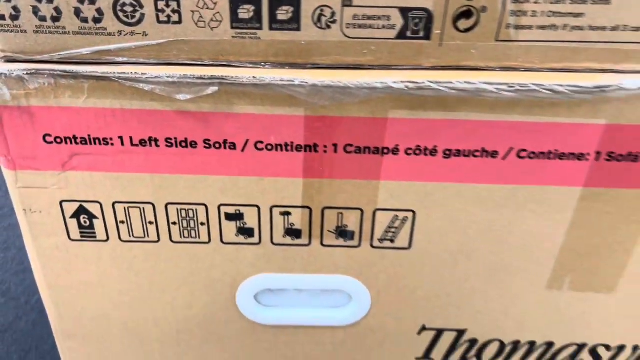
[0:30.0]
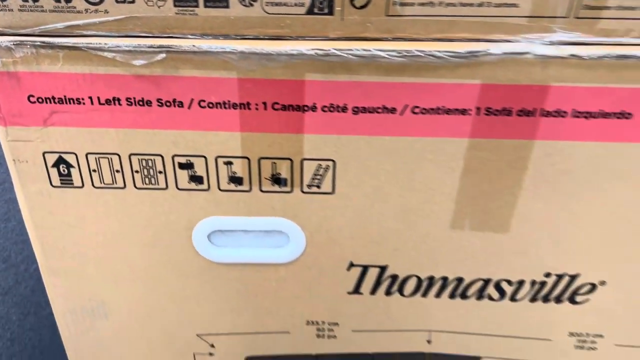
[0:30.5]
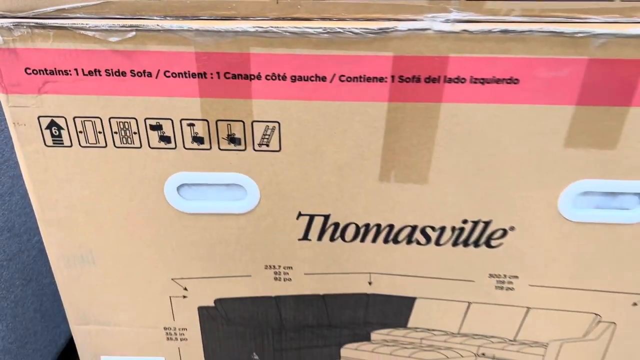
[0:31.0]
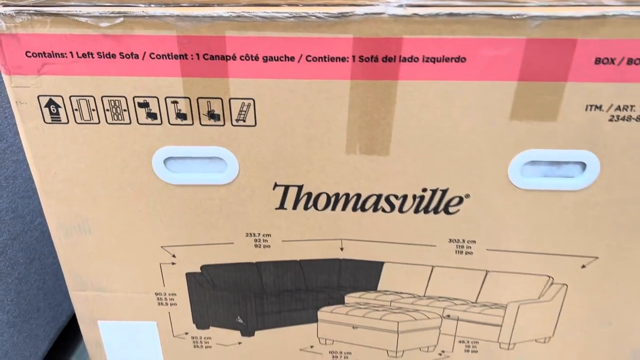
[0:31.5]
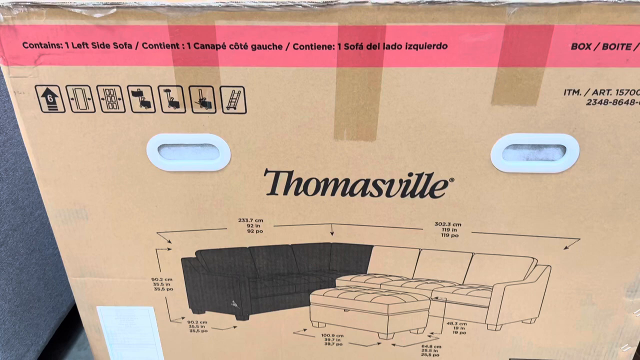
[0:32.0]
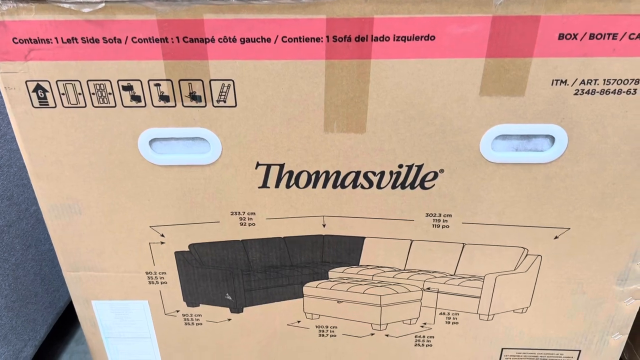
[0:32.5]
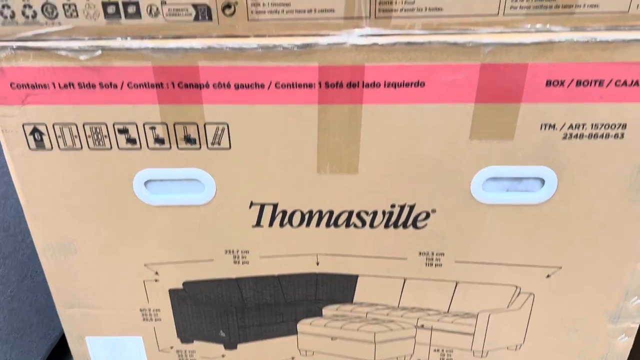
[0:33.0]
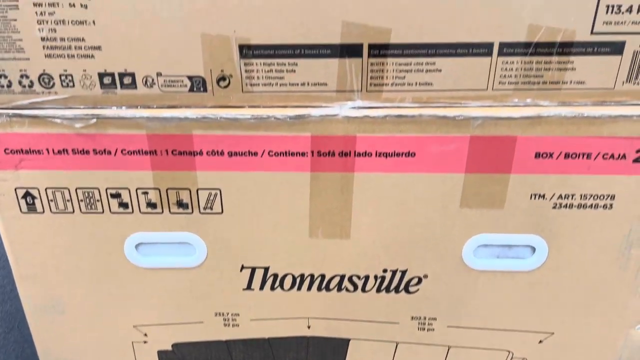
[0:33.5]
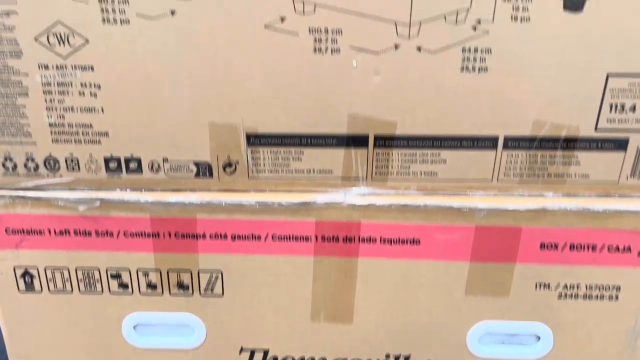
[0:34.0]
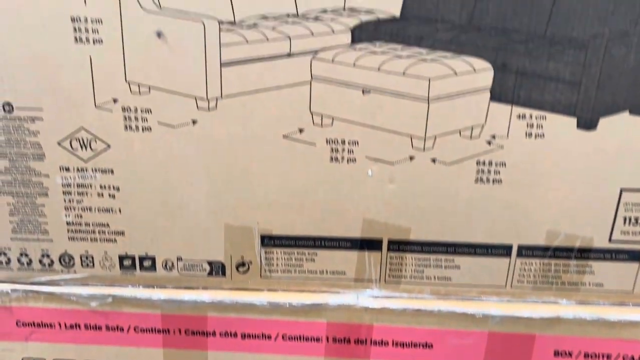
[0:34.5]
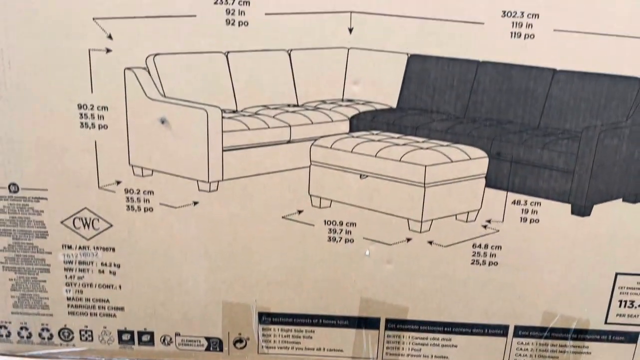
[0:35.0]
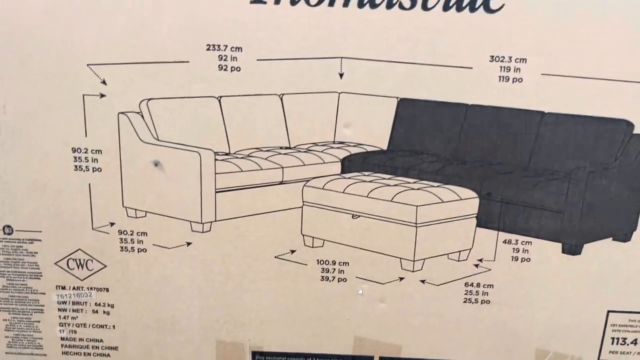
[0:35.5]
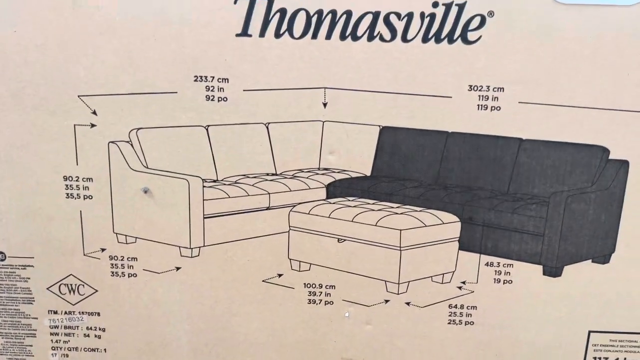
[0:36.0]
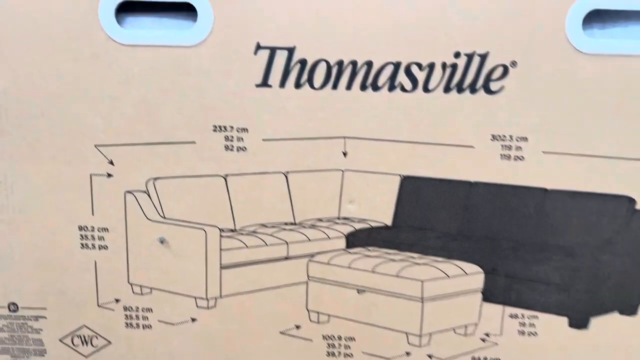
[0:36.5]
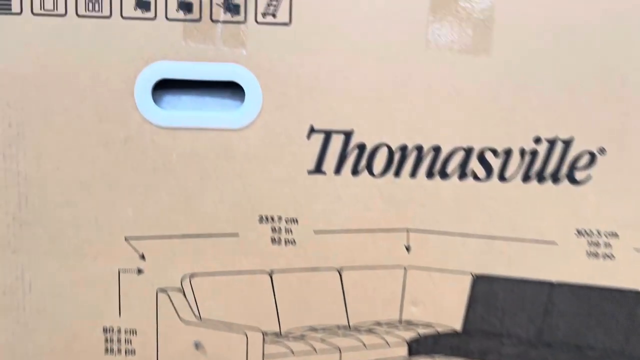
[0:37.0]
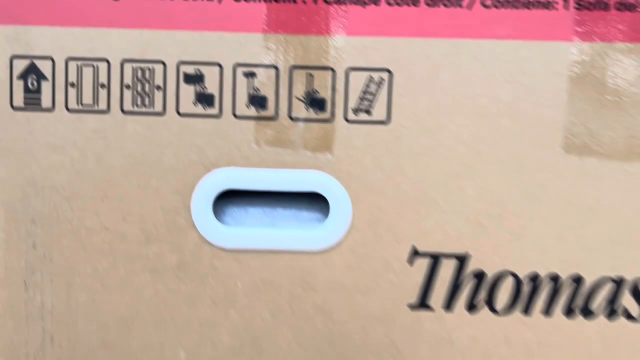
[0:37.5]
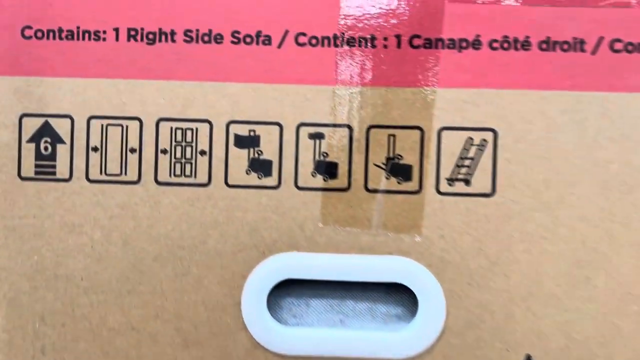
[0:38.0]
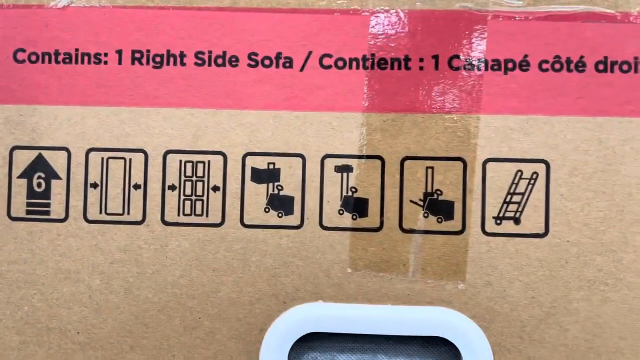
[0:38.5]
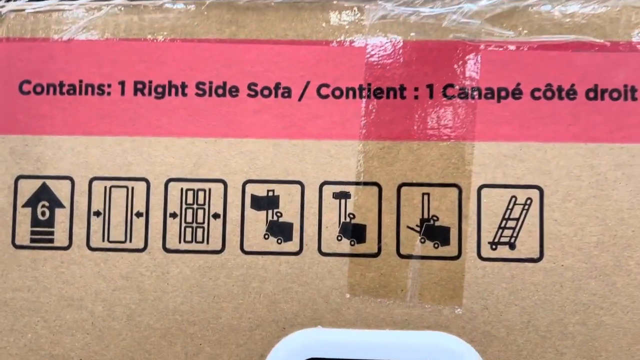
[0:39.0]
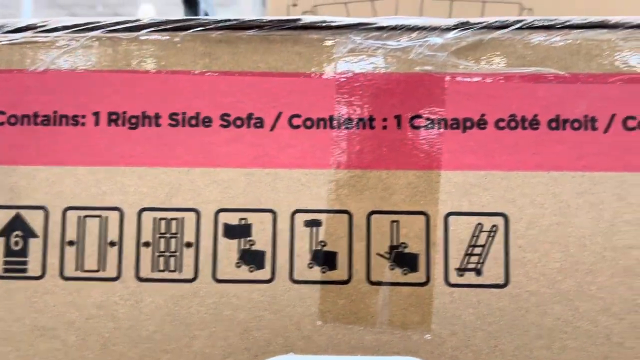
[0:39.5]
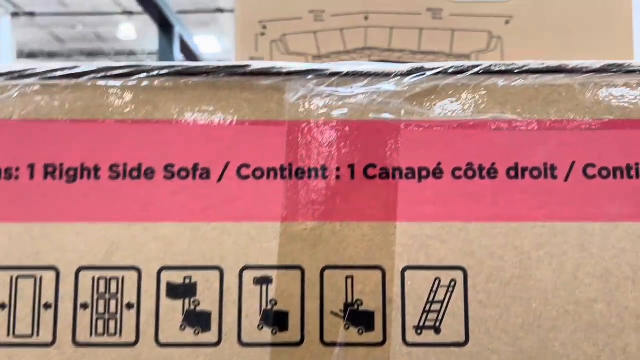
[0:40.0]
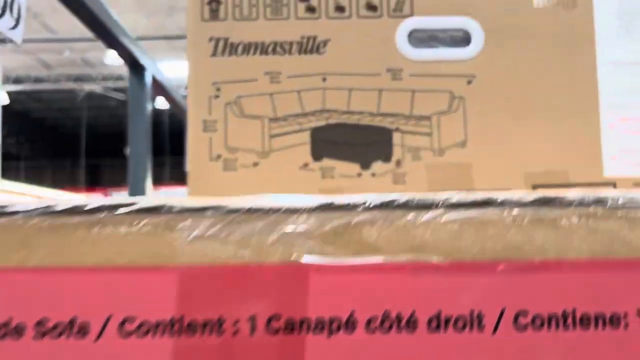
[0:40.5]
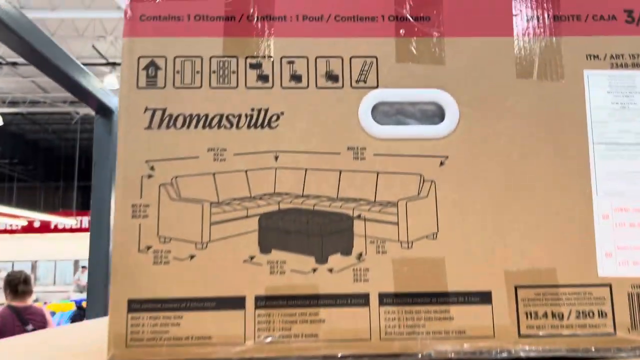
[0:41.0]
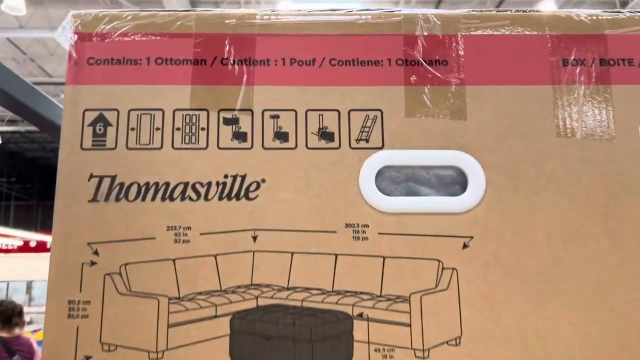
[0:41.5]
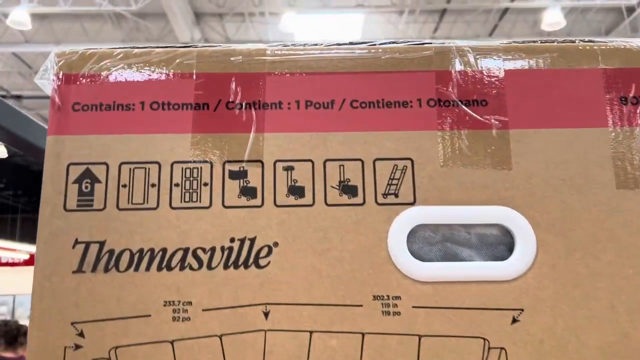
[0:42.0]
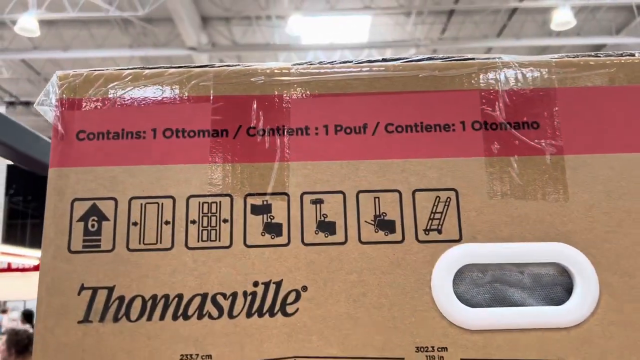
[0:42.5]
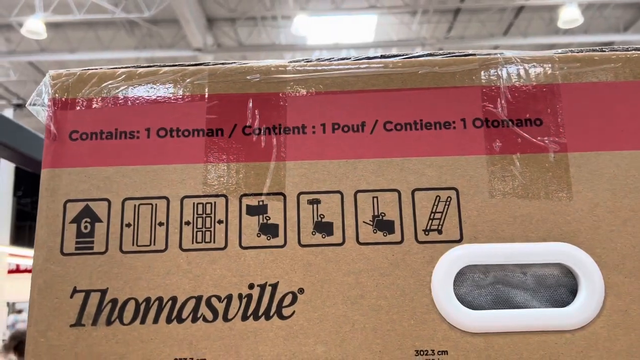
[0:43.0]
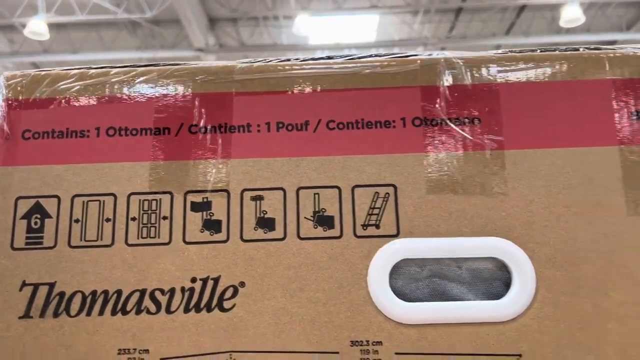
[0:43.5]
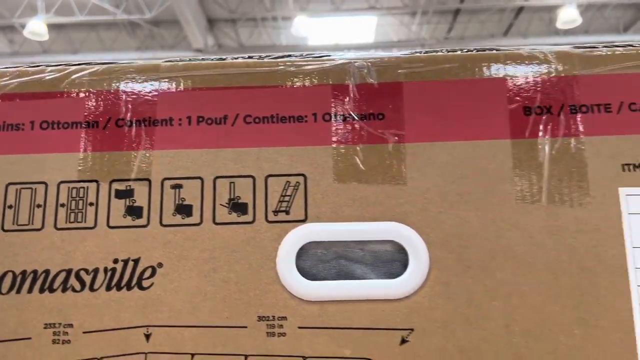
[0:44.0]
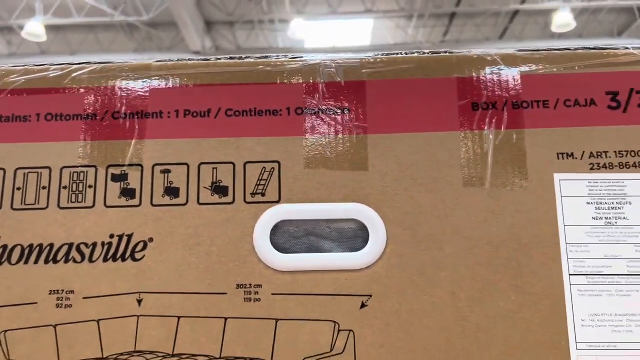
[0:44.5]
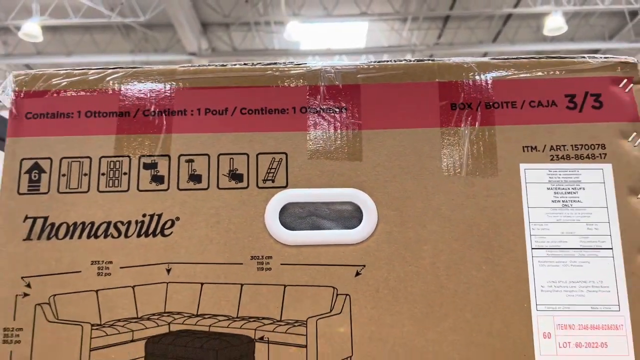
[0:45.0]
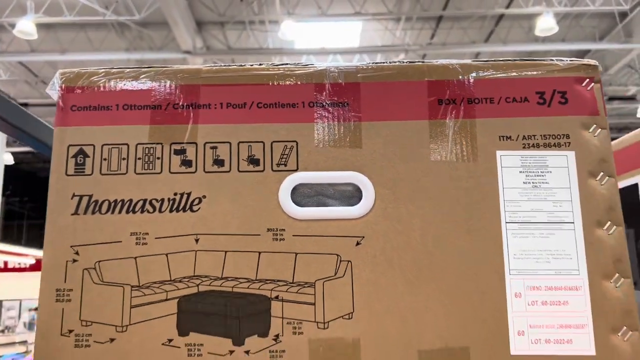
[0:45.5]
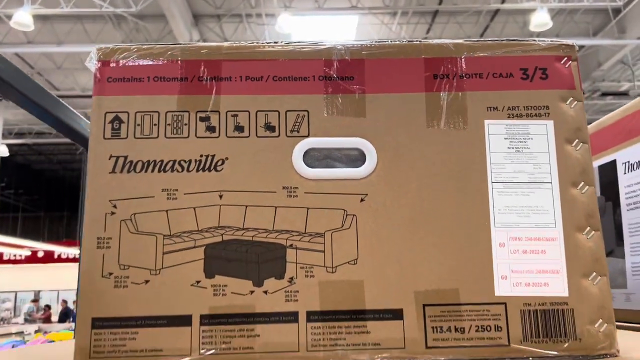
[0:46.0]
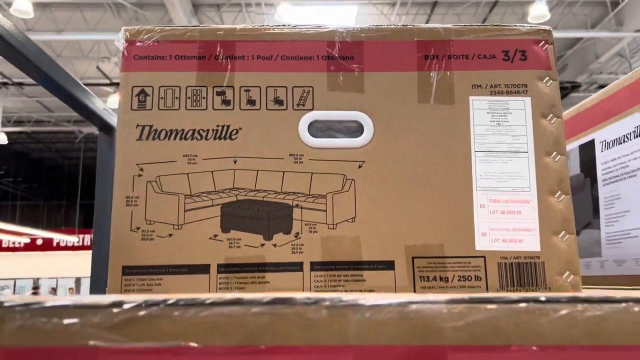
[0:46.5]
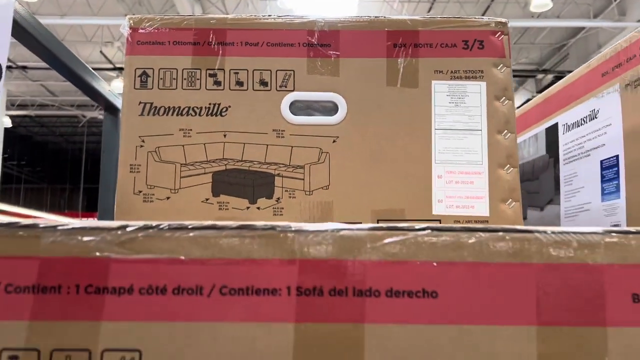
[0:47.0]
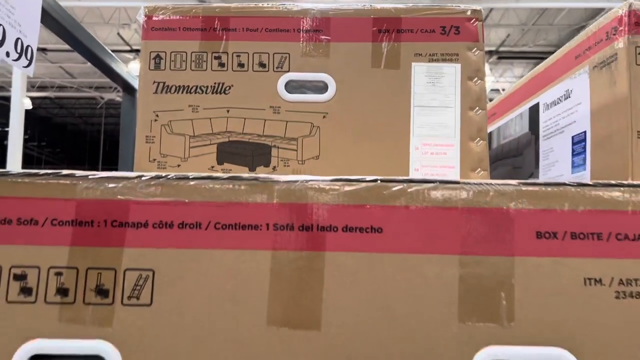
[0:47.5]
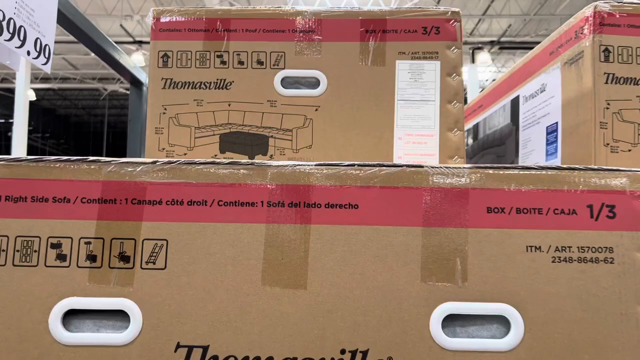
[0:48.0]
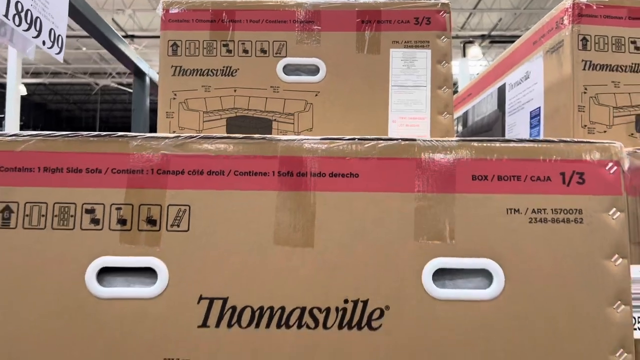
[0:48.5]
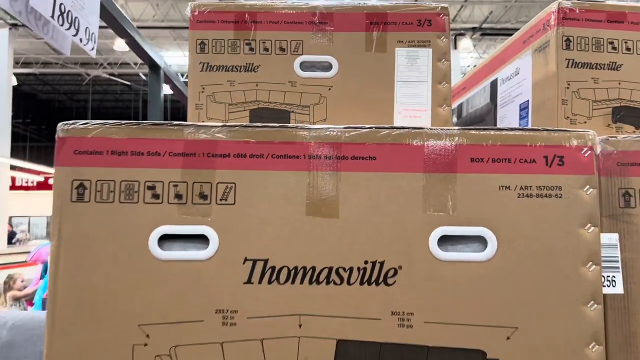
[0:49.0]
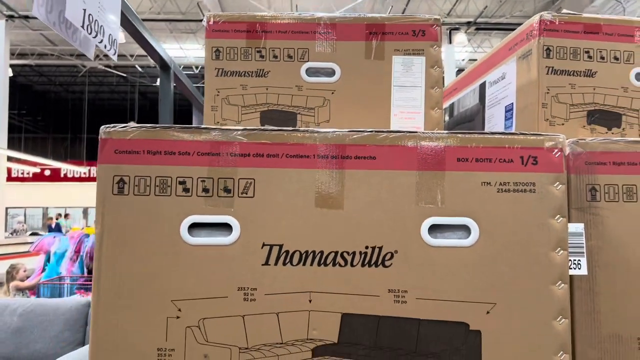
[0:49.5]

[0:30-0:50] There appear to be two plastic parts on the side of the box that could be used as handles. A simple sketch of the sectional on this part of the box features the measurements of the product. The side of the box also shows the item numbers on the top right. The box is large and cardboard, and the product information is printed on it in black ink. The person then shows another box with the same simple drawing of the sectional, zooming in on the part that says "contains one right side sofa". The tops of the boxes are taped up with clear packing tape, and the sides of the cardboard boxes have been reinforced with a couple of staples. A large pile of these sectional boxes is stacked on top of each other.